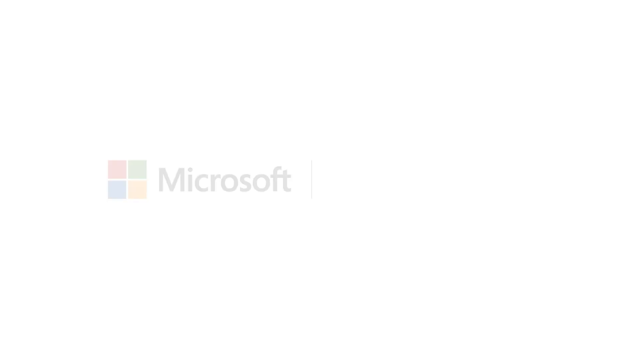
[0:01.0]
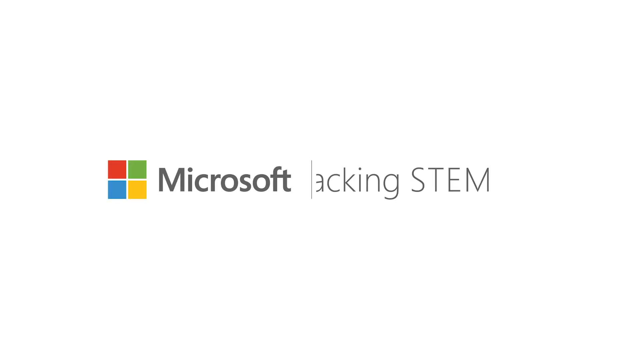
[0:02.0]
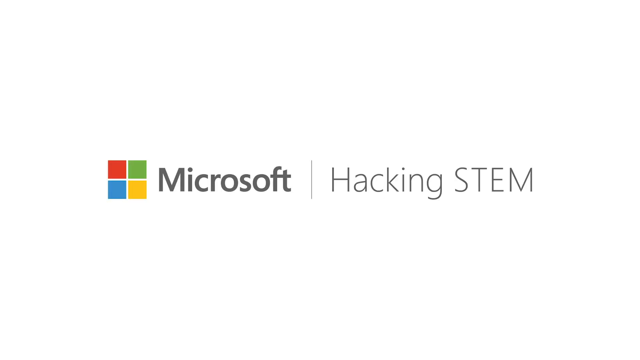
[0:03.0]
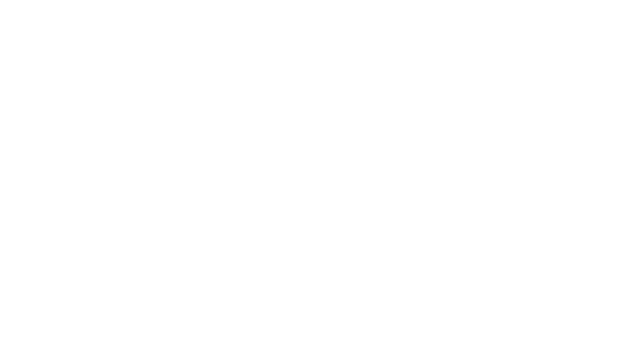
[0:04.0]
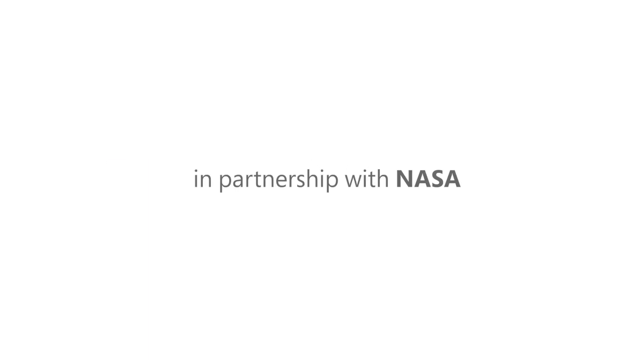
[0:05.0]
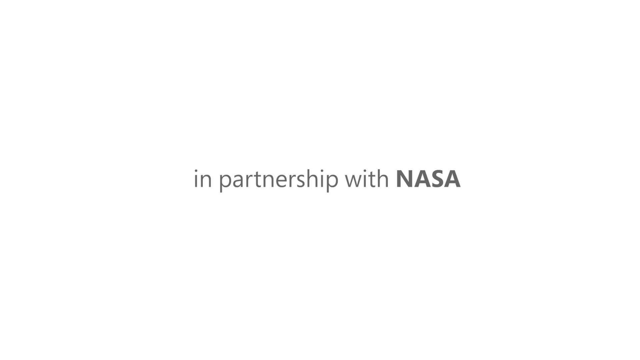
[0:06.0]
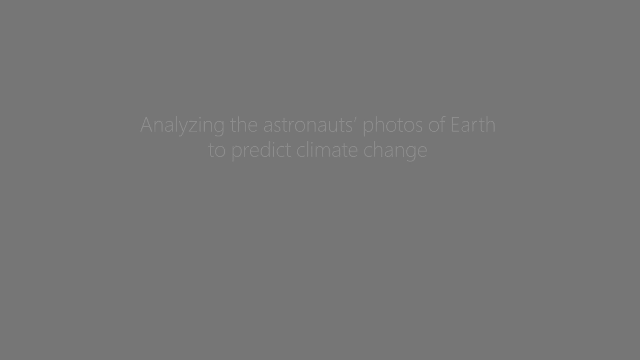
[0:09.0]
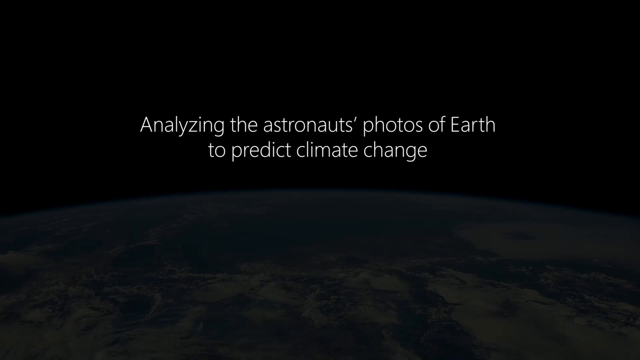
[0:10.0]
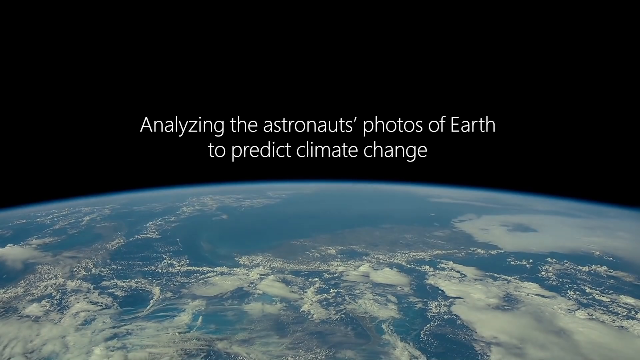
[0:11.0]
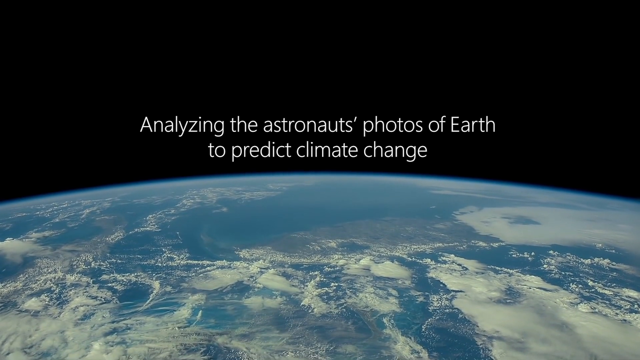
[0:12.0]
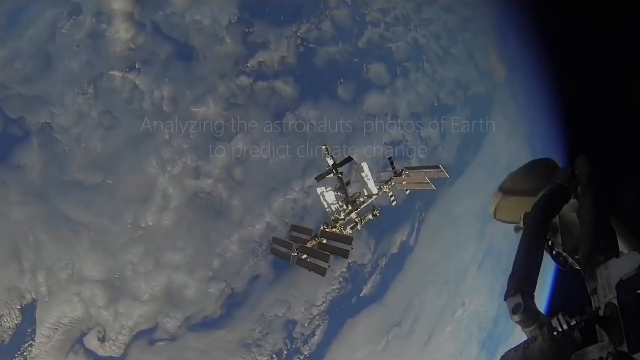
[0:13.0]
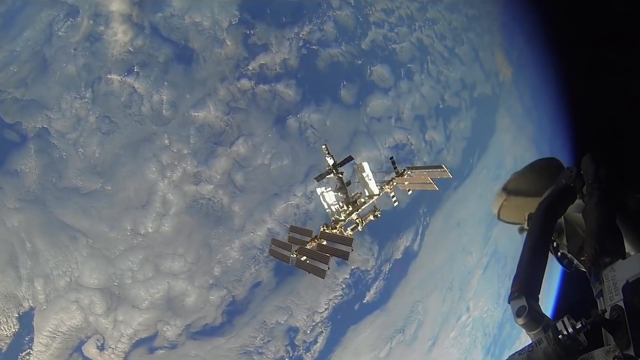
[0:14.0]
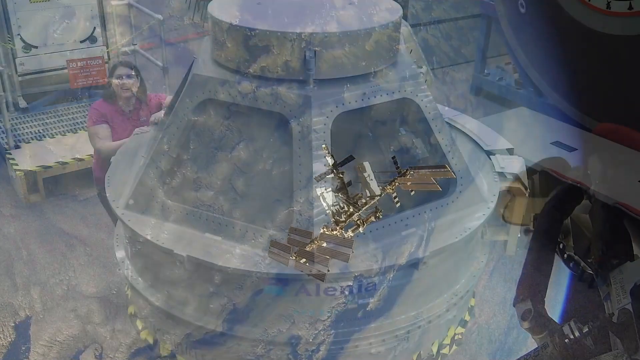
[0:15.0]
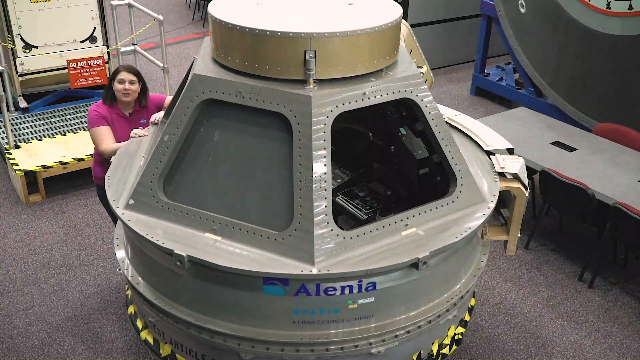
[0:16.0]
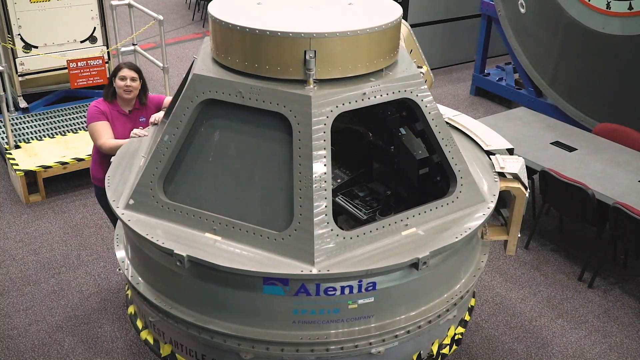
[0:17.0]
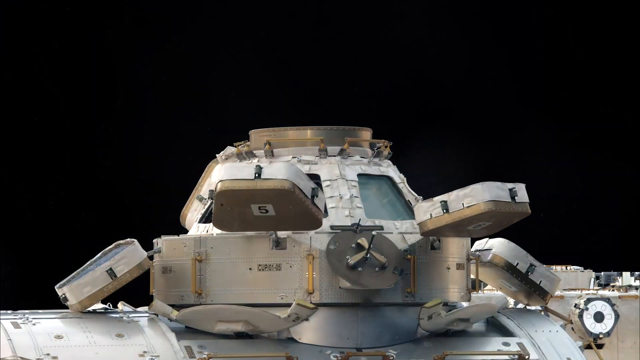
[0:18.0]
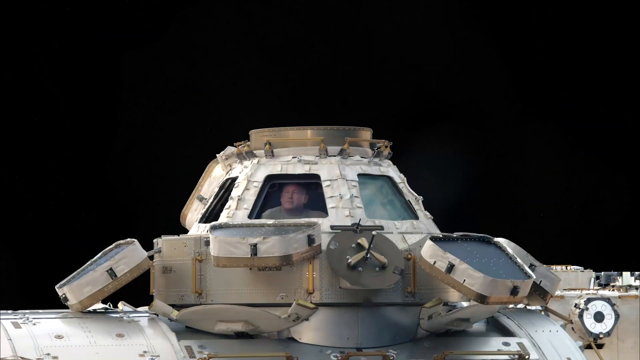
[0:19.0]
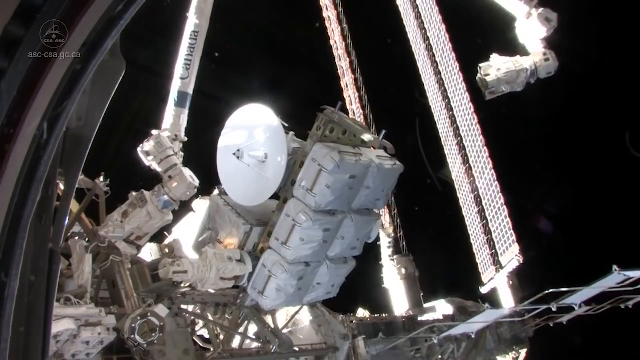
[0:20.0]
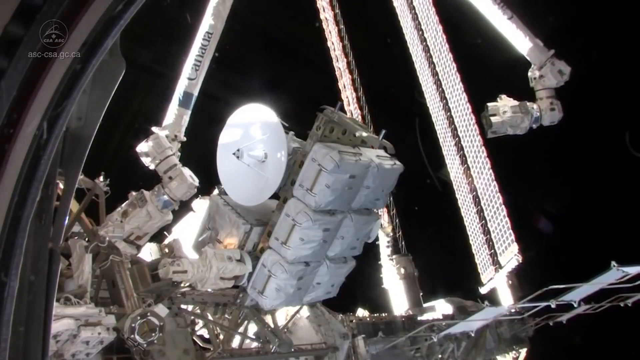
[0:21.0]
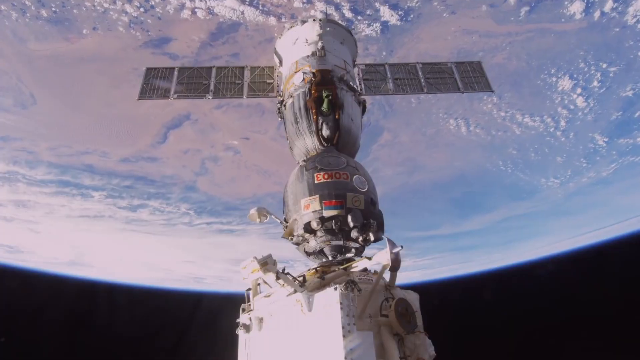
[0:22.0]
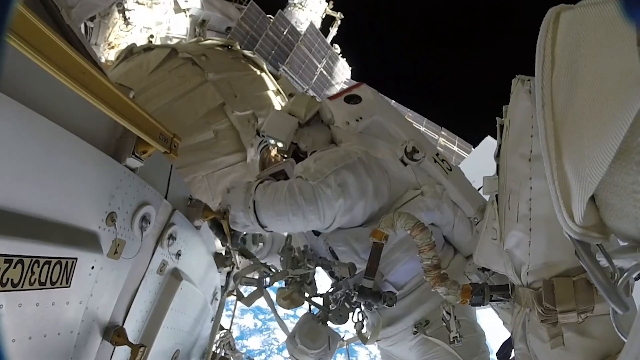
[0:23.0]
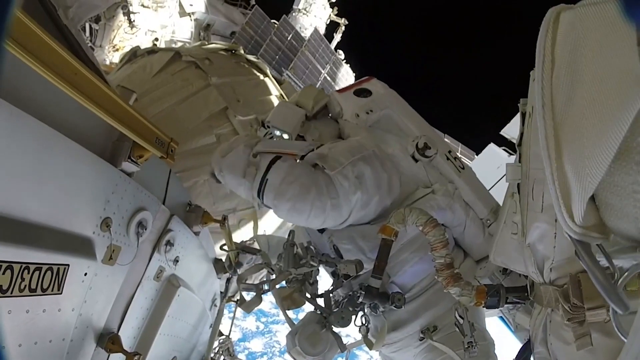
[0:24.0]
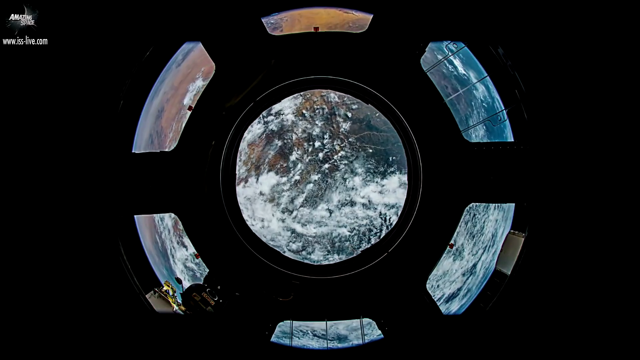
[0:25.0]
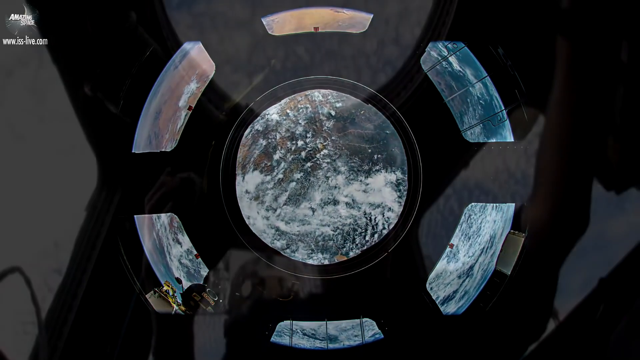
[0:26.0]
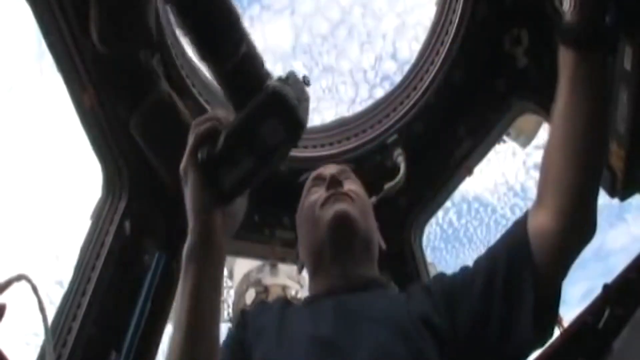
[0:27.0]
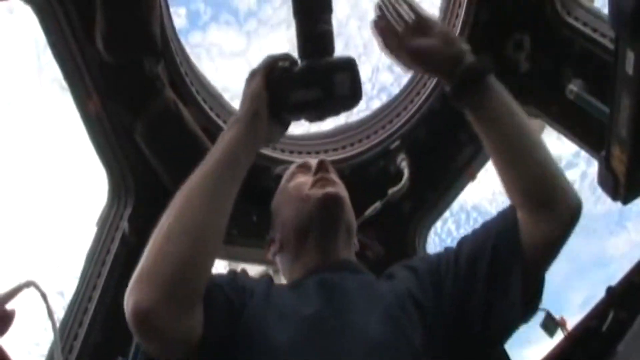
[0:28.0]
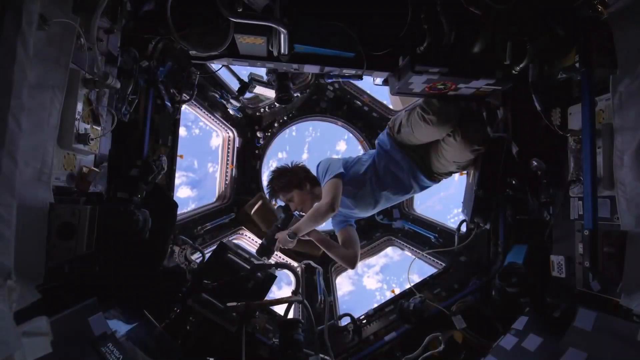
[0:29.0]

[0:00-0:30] The text "hacking STEM" and "in partnership with NASA" appears, followed by "analyzing the astronauts' photos of Earth to predict climate change." An overview of the Earth is shown, then a satellite with a version of the Earth on top and satellites floating in space. A Caucasian woman around 30-ish years old appears, and in front of her is what looks like either some kind of capsule or some type of satellite, with text on it. The capsule is shown with someone sitting inside it, and it opens. Next is some kind of equipment in space on which the word "Canada" seems to appear on the arm; what looks like a satellite sticks out of it, with a robotic arm moving around. A satellite moves into a placement, and an astronaut works outside on some type of equipment. A version of the Earth appears that looks almost like a picture of part of the Earth. A man sits in the capsule with a camera, taking pictures, and a Caucasian woman with short hair takes what looks like a video of something in the capsule, with the world visible on the outside.